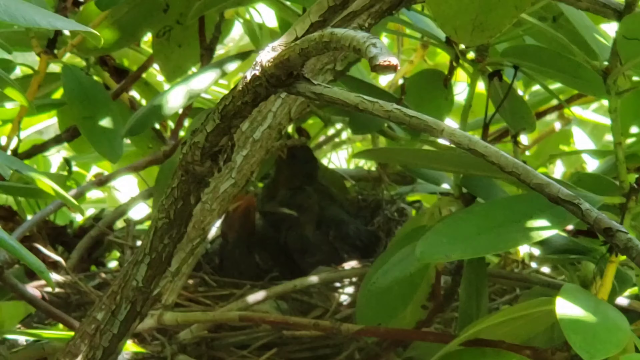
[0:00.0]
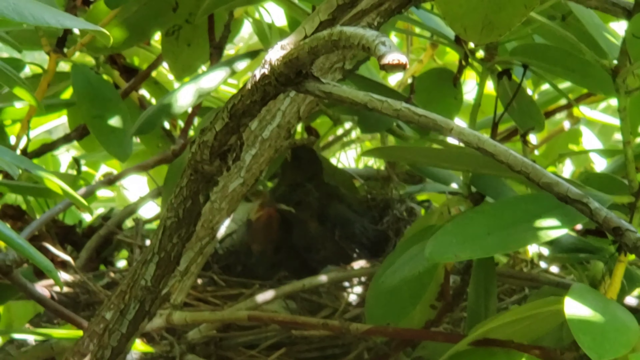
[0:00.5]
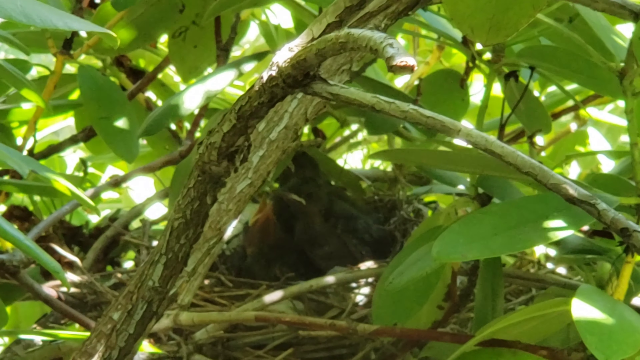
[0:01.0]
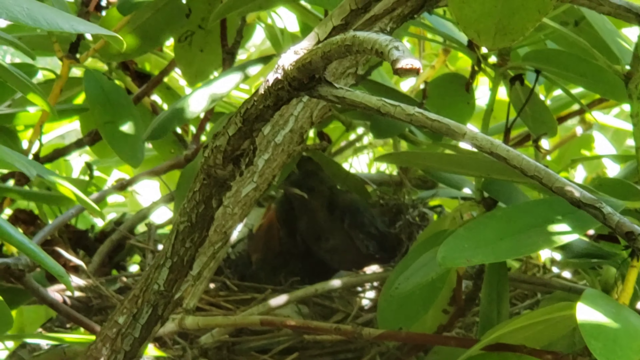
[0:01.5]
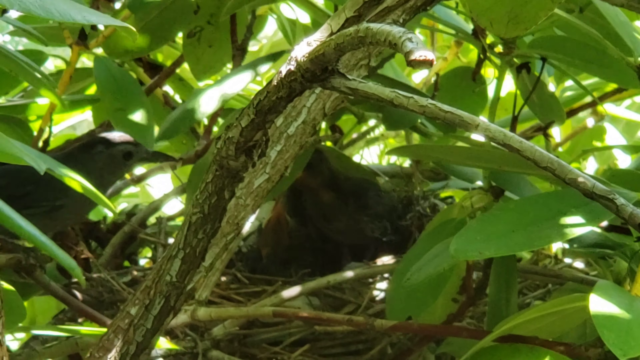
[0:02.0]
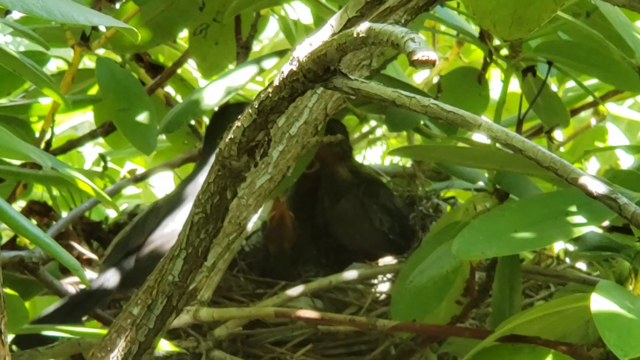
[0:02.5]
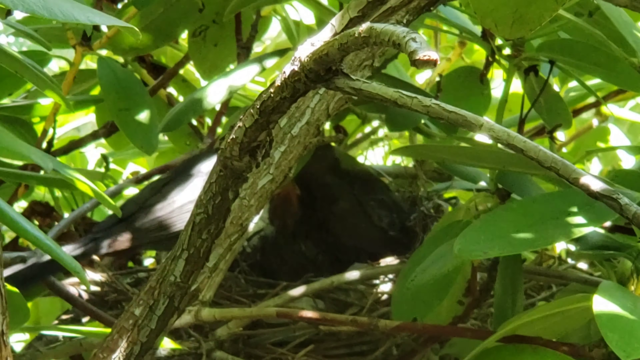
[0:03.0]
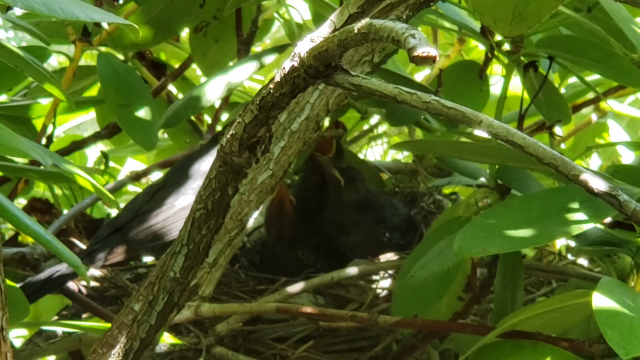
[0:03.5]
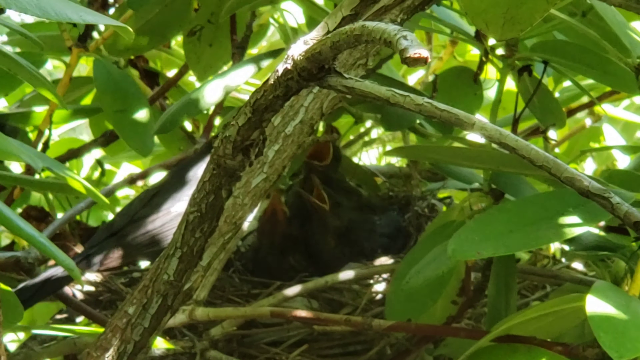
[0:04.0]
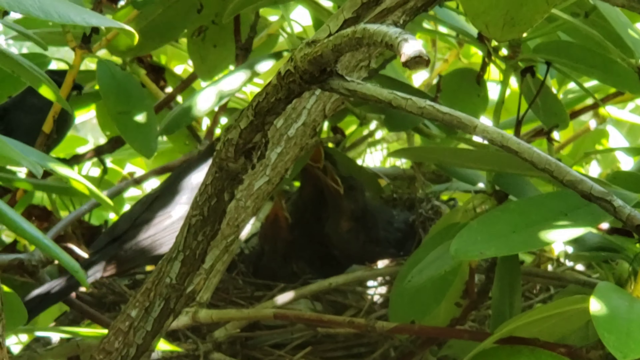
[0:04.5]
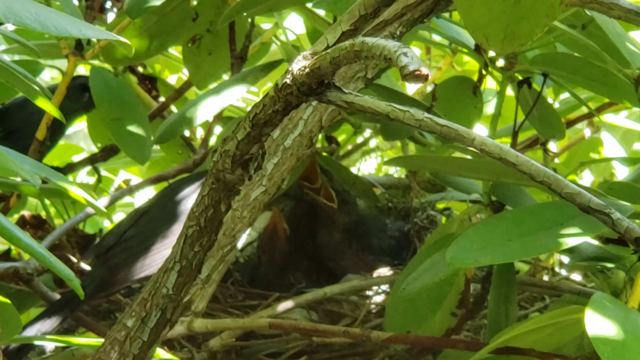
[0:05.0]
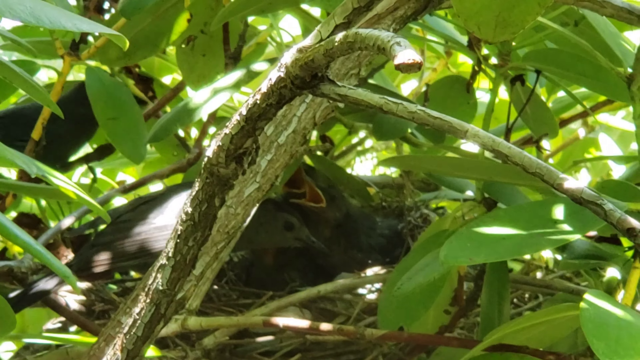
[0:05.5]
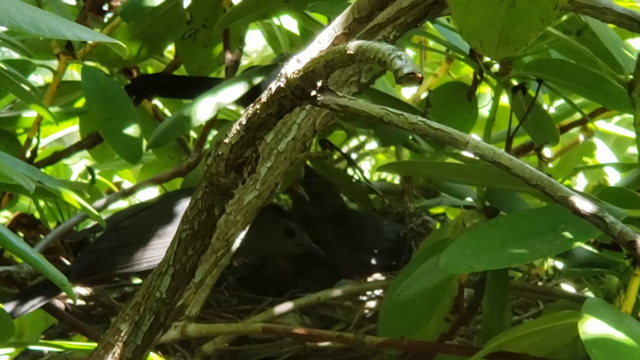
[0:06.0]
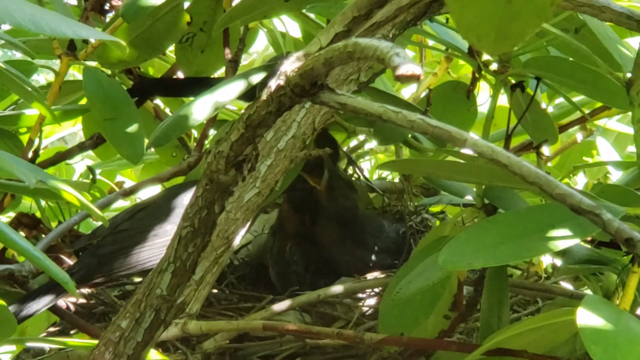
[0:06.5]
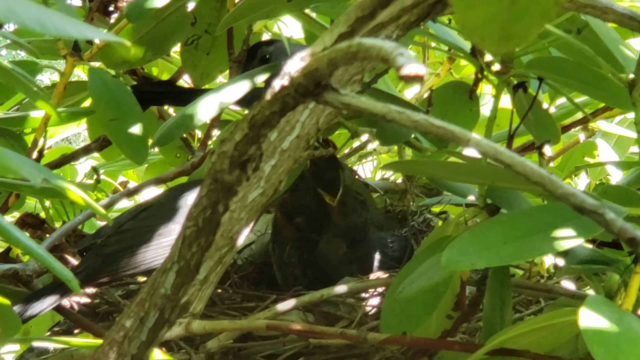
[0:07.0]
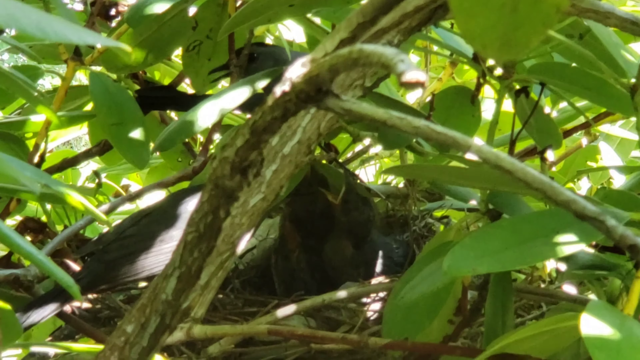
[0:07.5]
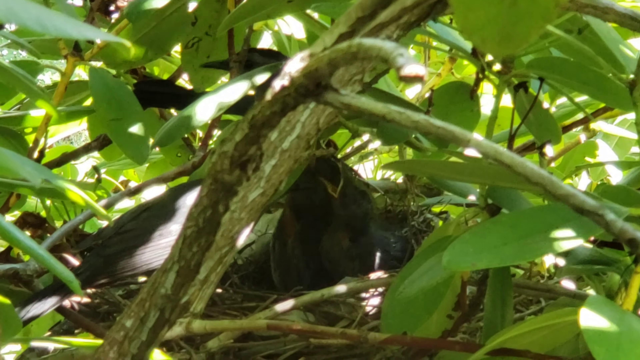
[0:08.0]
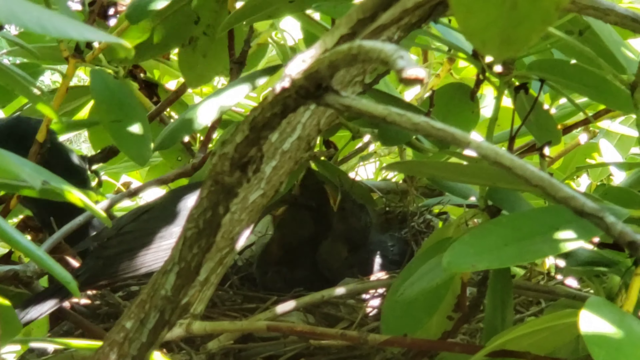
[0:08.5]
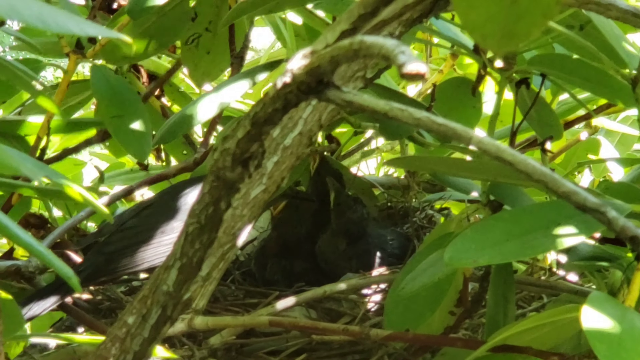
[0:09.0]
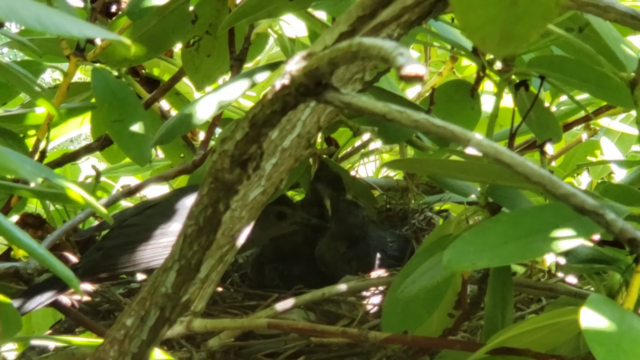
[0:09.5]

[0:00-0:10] A nest of small birds holds three little chicks. The chicks are kind of dark in colour, possibly a greyish, slightly brown shade. They all have their beaks open, apparently waiting for food, so they may be quite hungry. The nest is in some green foliage. One of the parent birds comes back to the nest, and then the other one returns as well, so both parents are in view. A branch blocks one of them, so although the chicks appear to be getting fed, not everything that is happening can be seen.